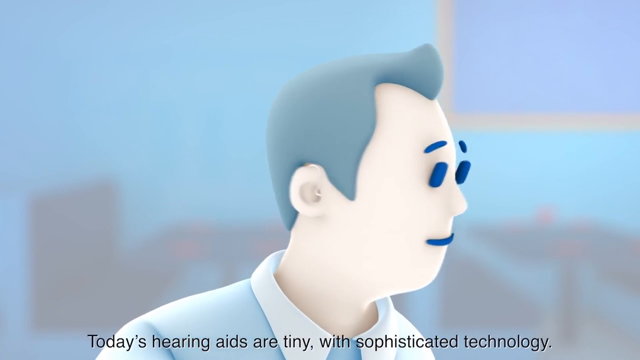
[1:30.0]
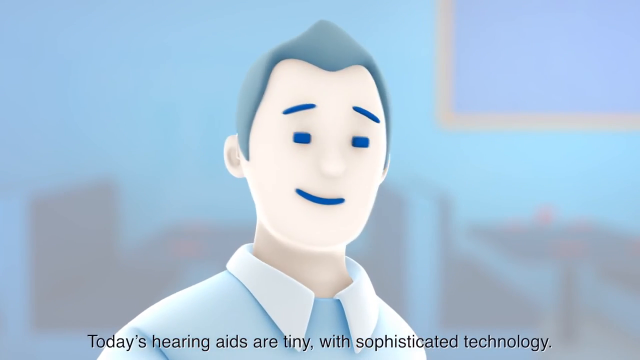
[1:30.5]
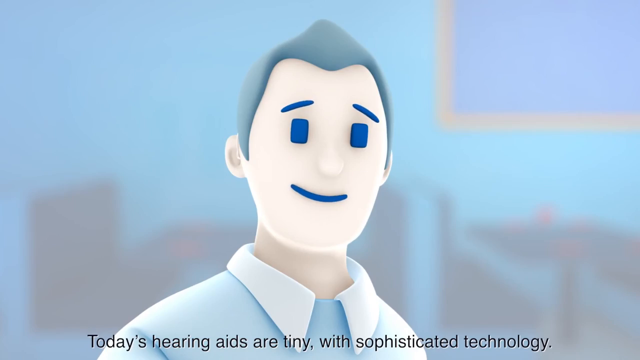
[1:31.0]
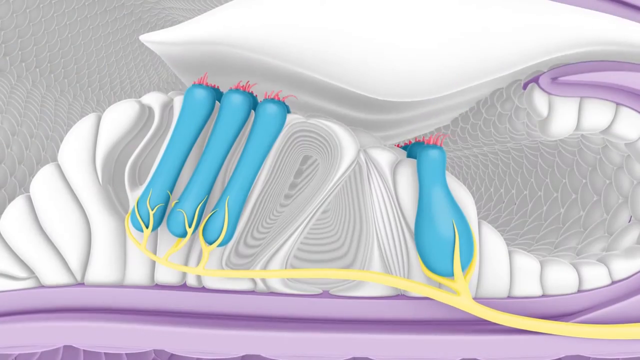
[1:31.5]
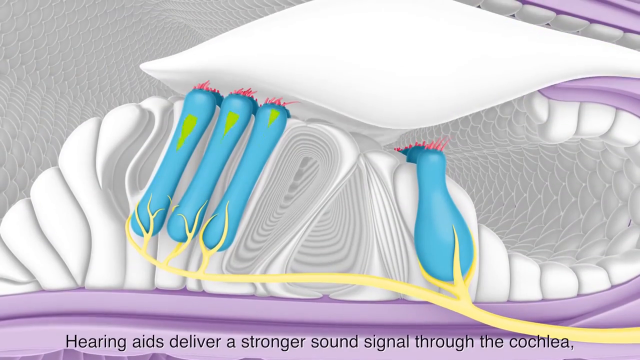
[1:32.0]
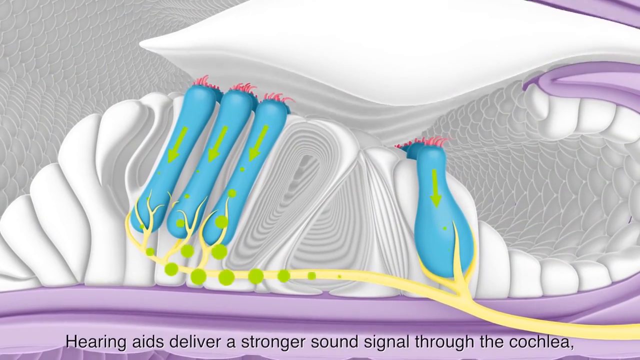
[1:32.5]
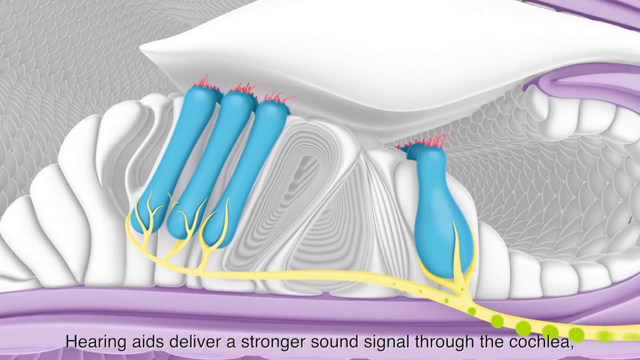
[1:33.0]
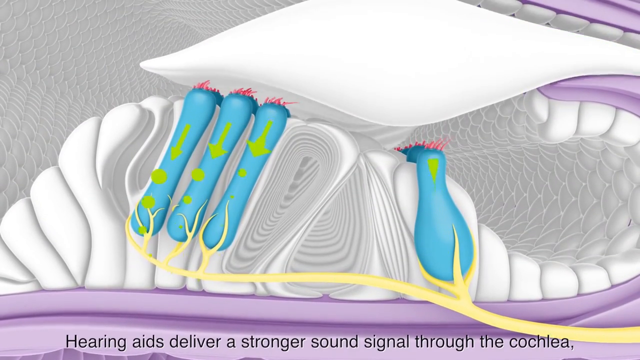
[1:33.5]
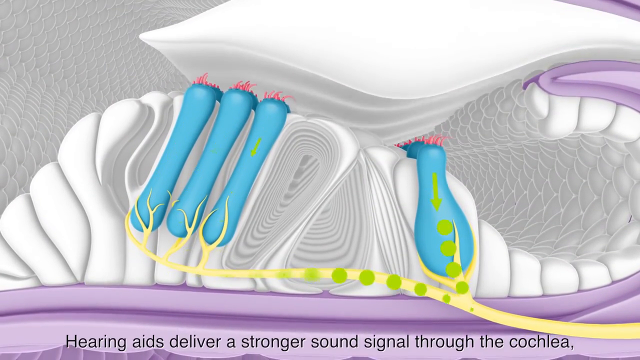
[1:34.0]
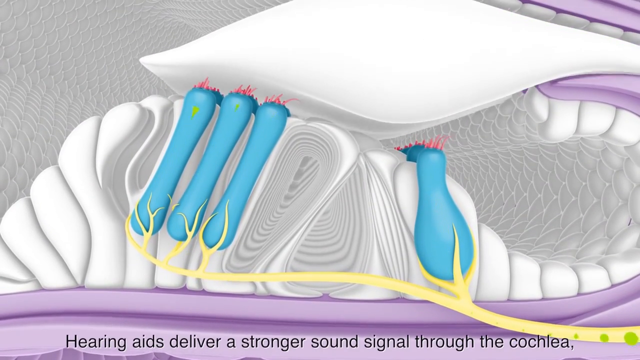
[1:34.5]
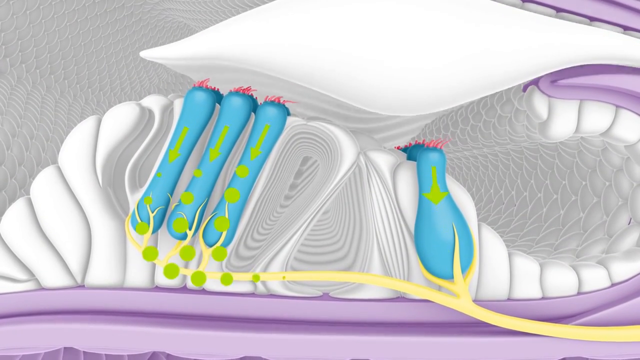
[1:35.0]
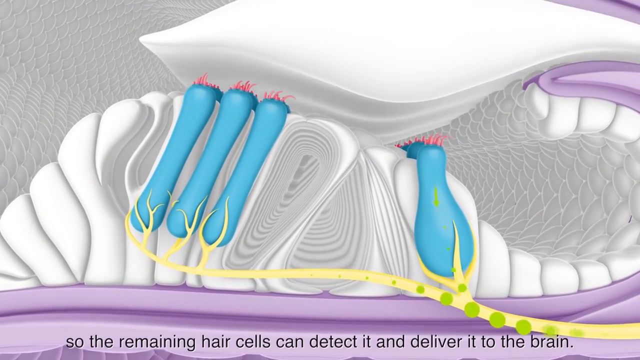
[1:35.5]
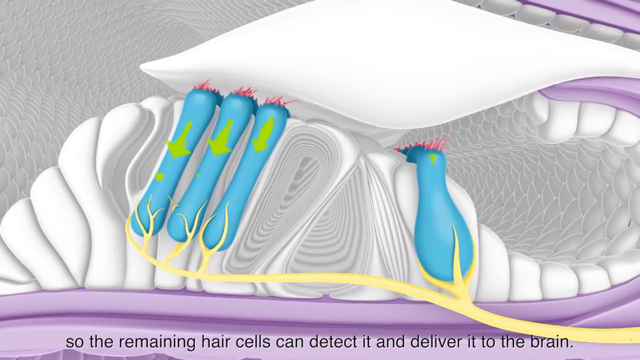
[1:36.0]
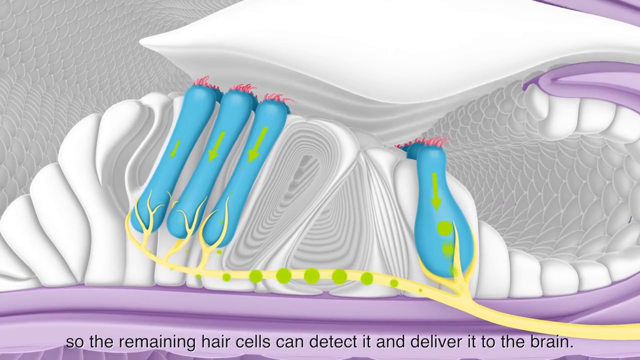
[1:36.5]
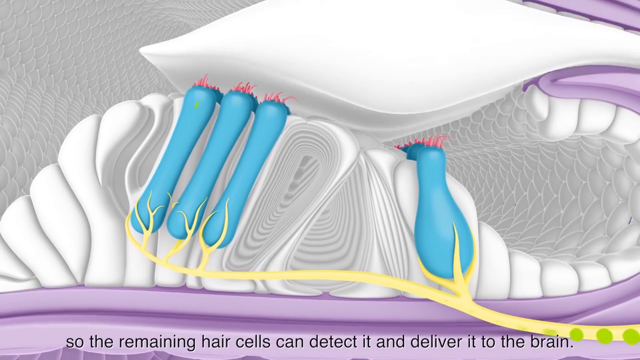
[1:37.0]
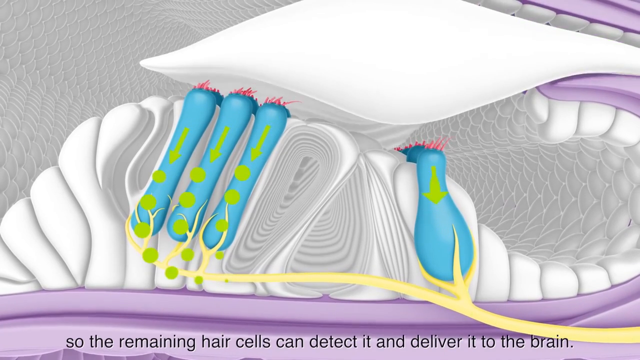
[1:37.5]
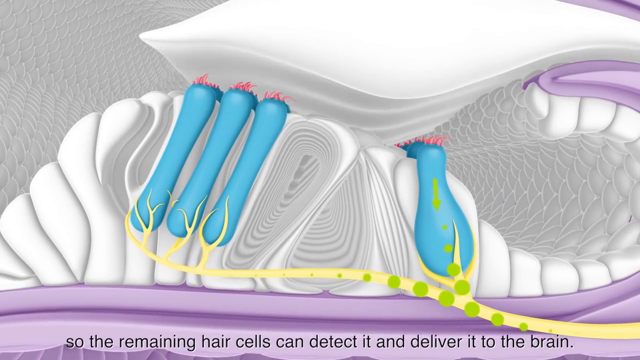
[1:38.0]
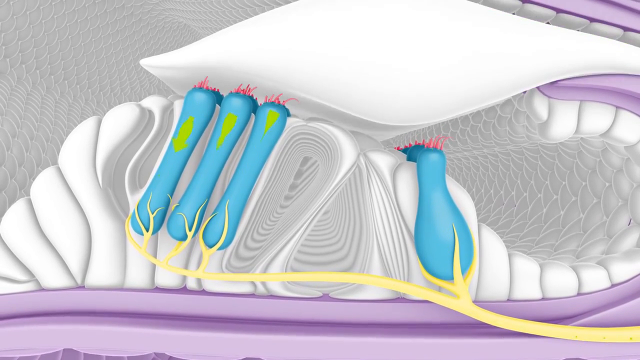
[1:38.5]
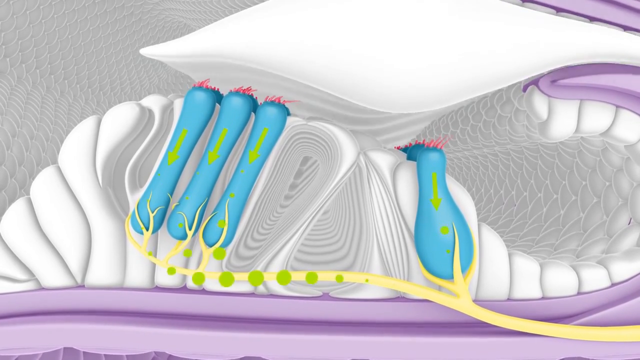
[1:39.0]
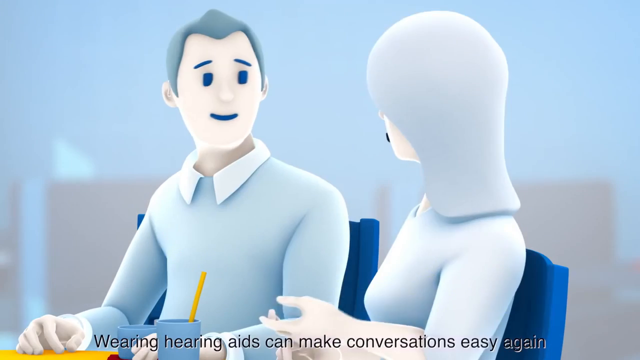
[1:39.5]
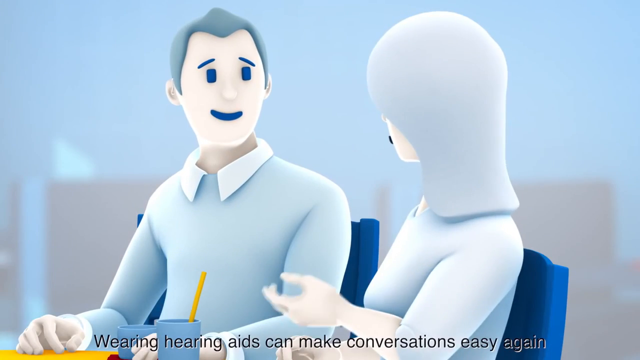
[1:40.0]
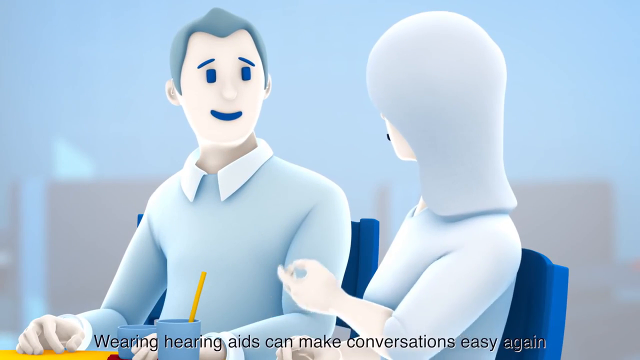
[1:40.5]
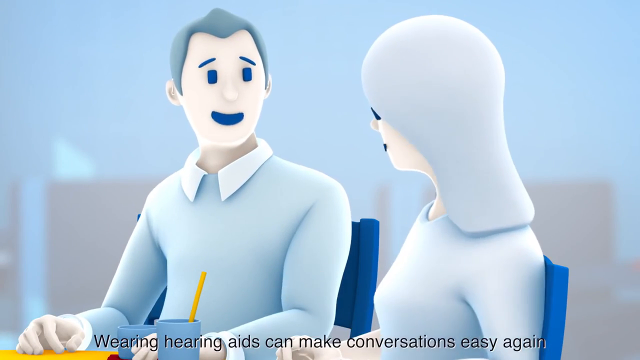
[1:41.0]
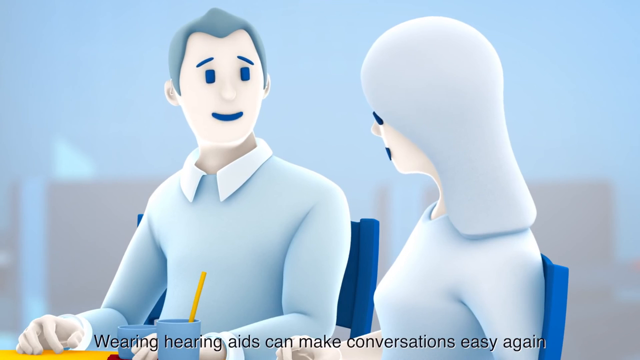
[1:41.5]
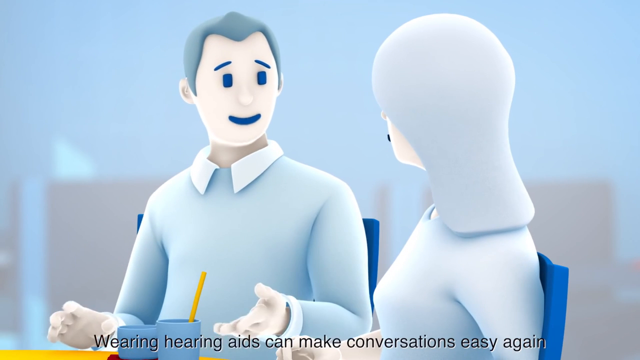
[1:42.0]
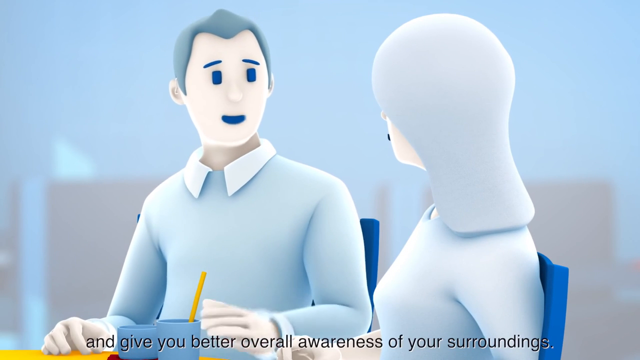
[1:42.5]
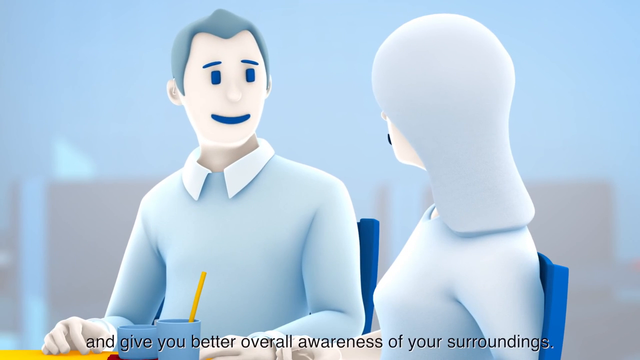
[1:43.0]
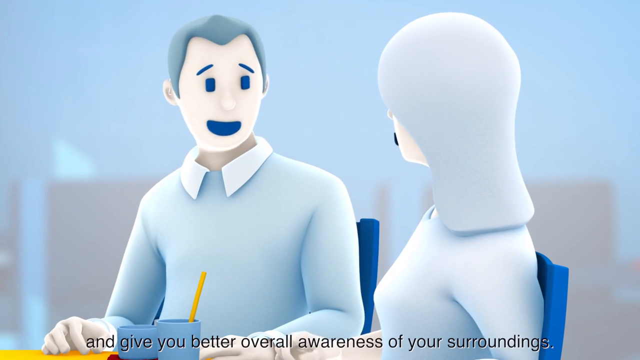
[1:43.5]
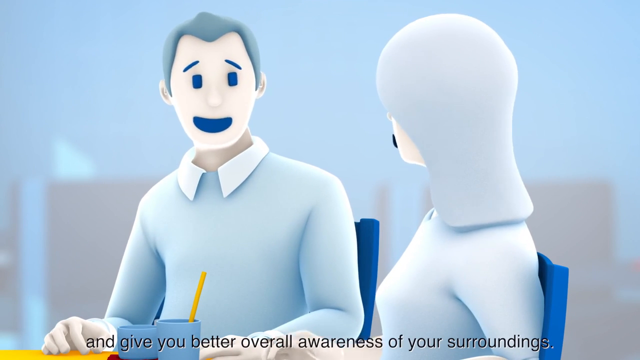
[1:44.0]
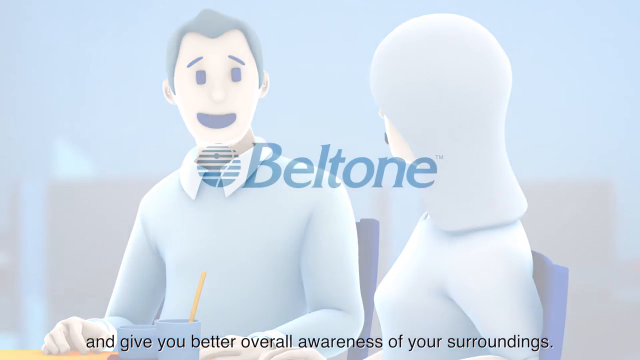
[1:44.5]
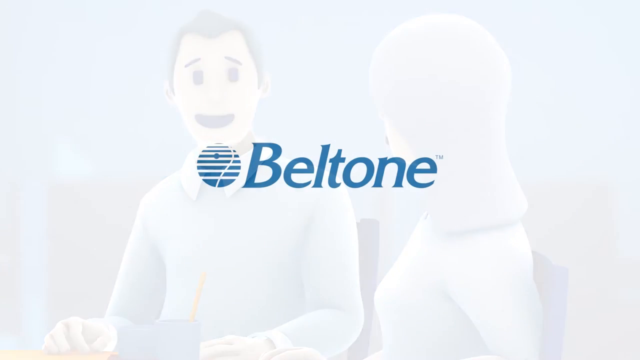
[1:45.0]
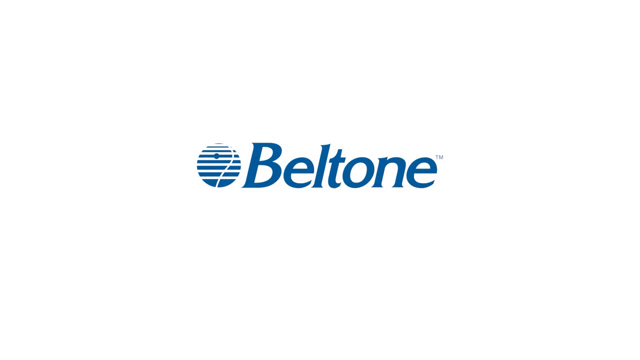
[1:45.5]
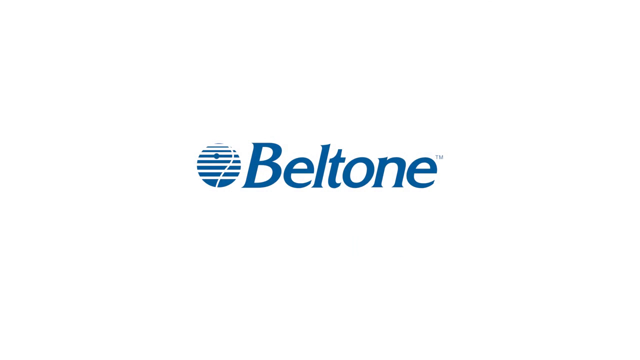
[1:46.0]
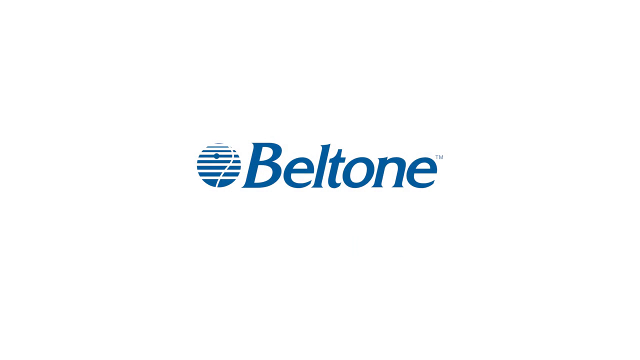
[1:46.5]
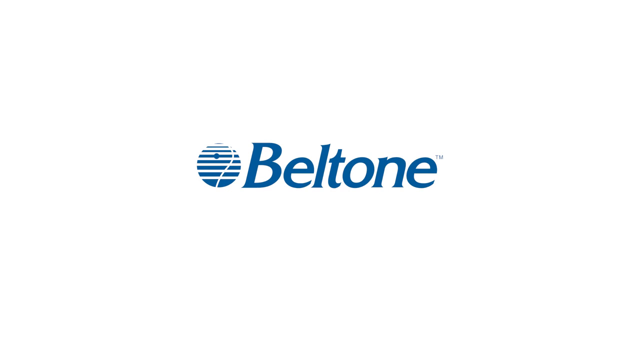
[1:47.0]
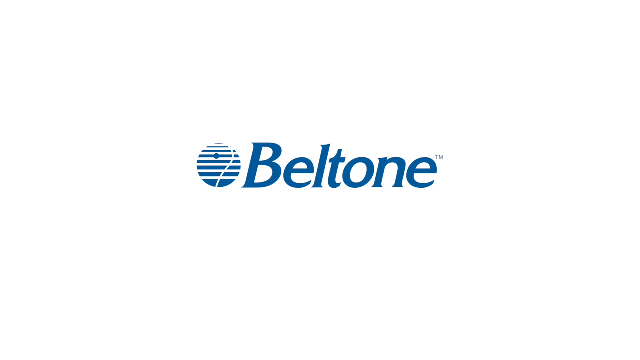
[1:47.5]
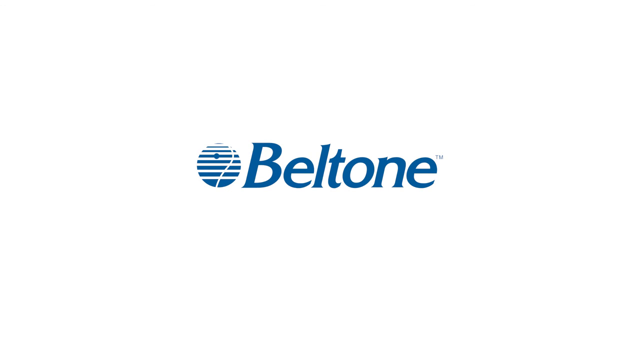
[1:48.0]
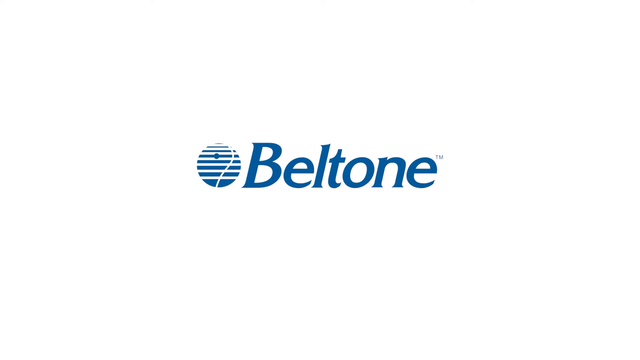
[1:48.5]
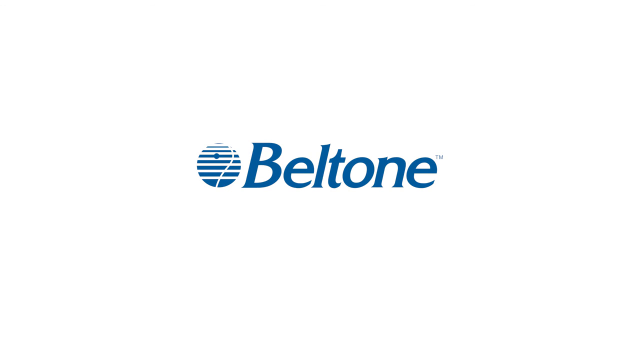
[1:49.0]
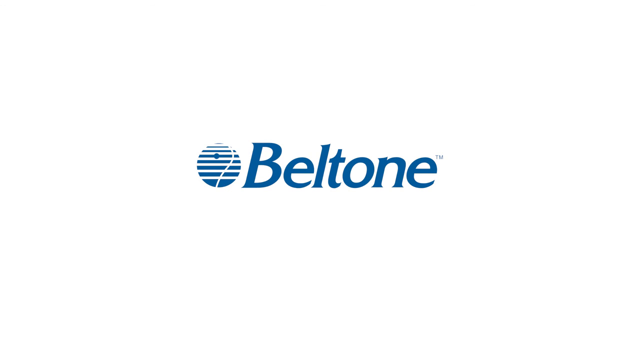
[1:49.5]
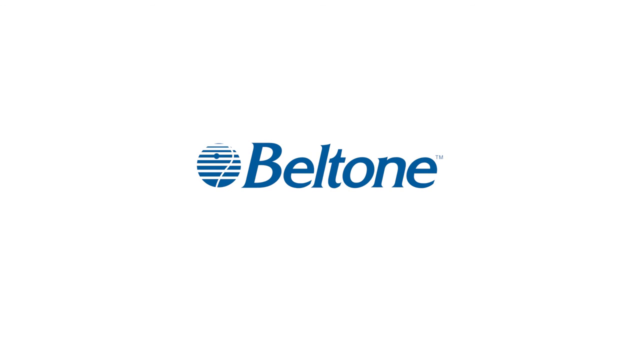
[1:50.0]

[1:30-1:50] The animation shows a man and a woman having a conversation; the man, who has hearing issues, now has a hearing aid in his right ear. He has turned his head to the left and is looking toward the female, then looks back at the camera and smiles. The animation then shows what is happening inside his head: blue tubes with red filaments at the top of each and yellow nerves attached at the lower end. As a white piece of fabric or something moves and presses against the red filaments, green arrows light up pointing downward, and a signal is sent through the blue tube into the vein or nerve and down the line, as if they are all working correctly now. The couple is then shown sitting at a table. The back of the female's head is visible as she talks to the male, who looks at her and smiles. He laughs and talks, and she talks. At the end of the video, the logo and the brand name Beltone appear.